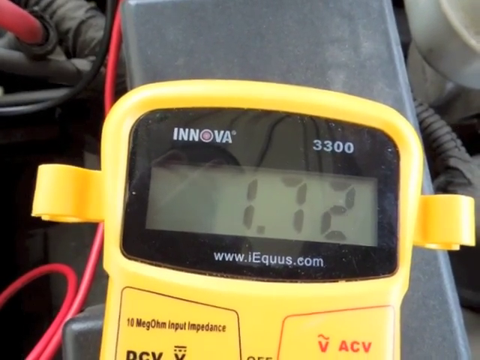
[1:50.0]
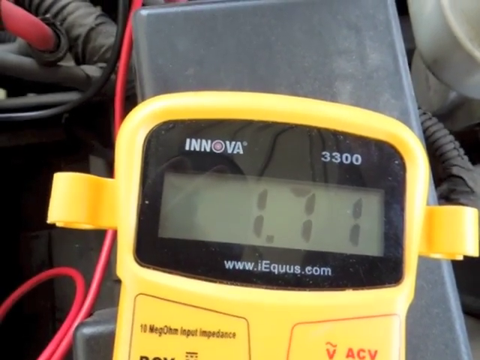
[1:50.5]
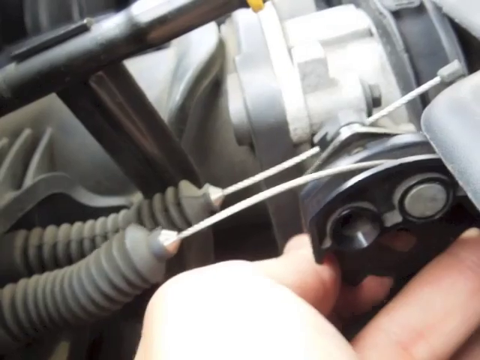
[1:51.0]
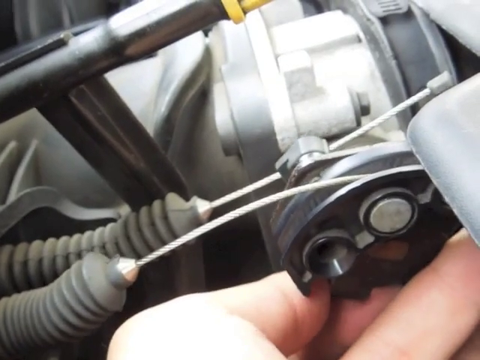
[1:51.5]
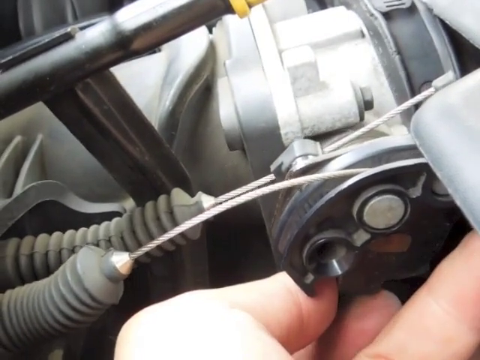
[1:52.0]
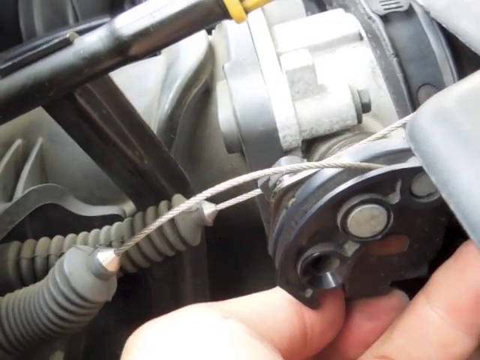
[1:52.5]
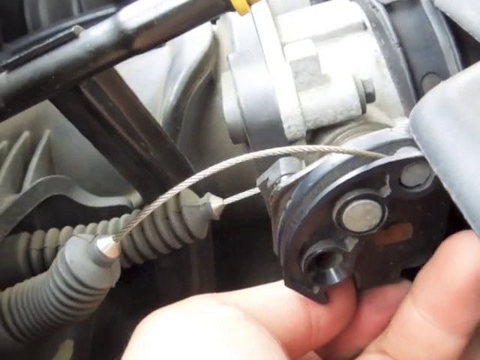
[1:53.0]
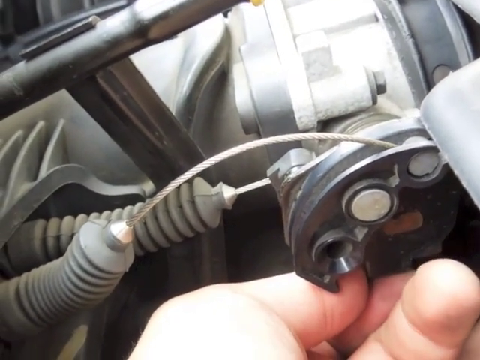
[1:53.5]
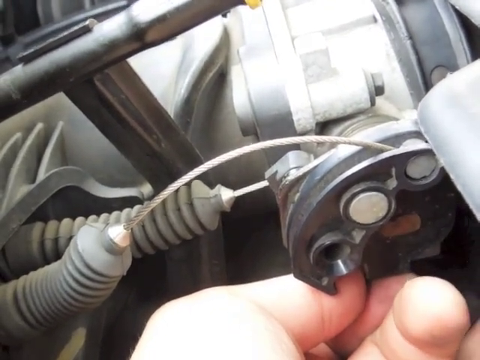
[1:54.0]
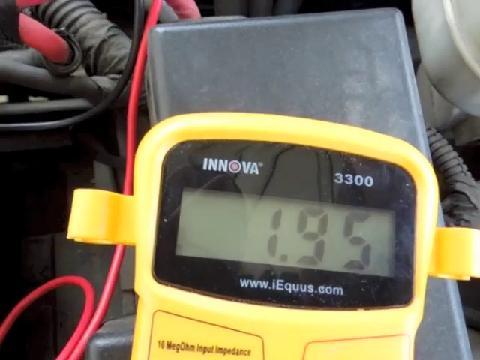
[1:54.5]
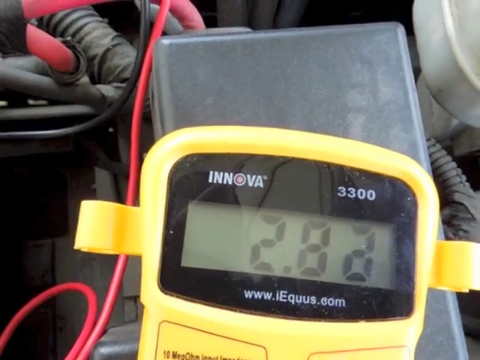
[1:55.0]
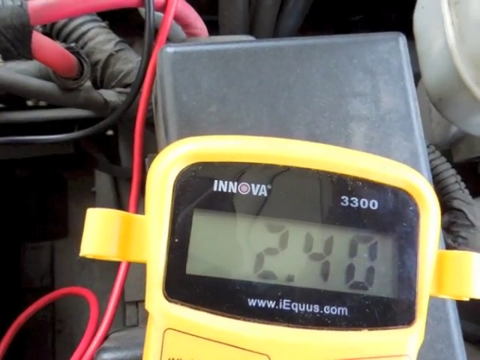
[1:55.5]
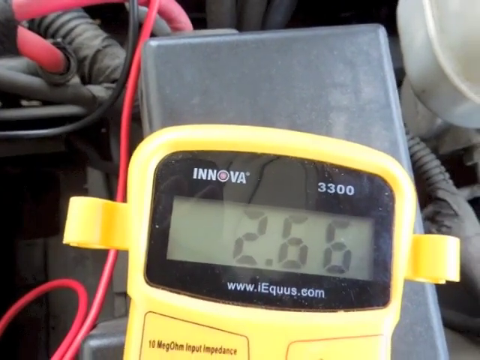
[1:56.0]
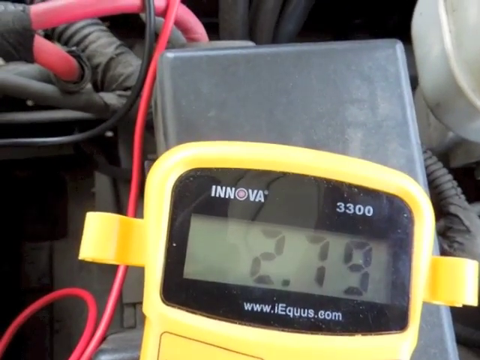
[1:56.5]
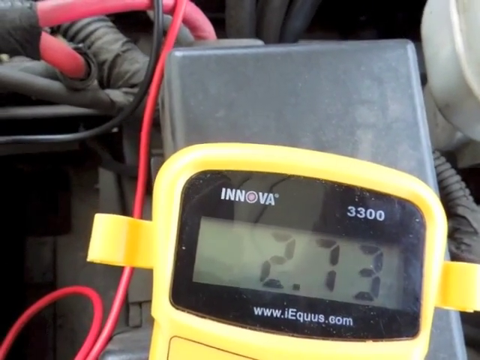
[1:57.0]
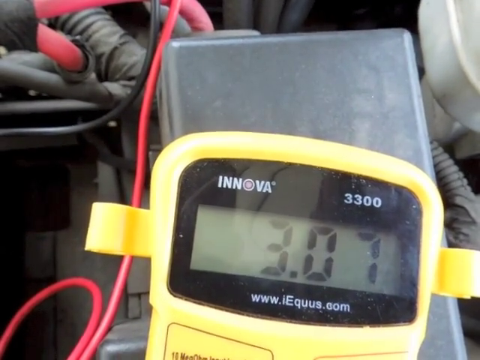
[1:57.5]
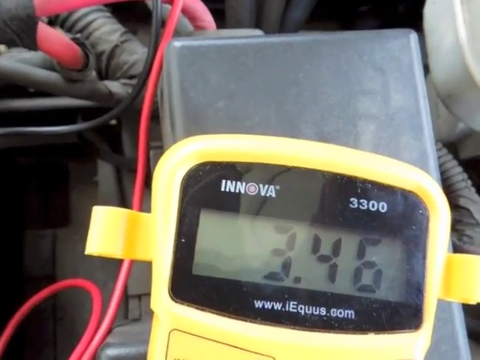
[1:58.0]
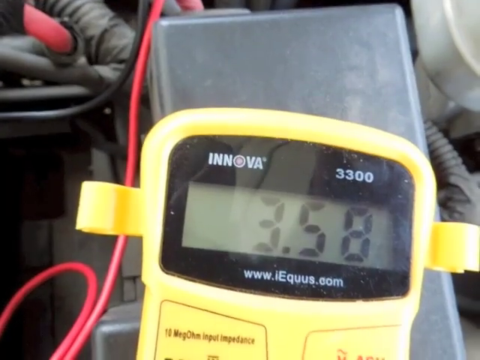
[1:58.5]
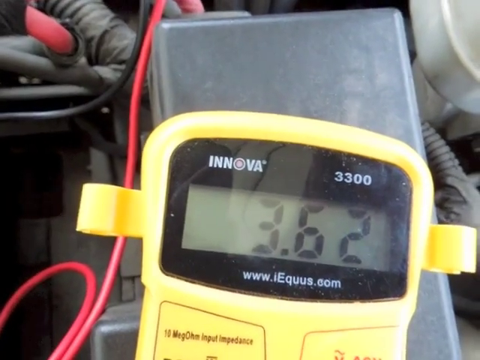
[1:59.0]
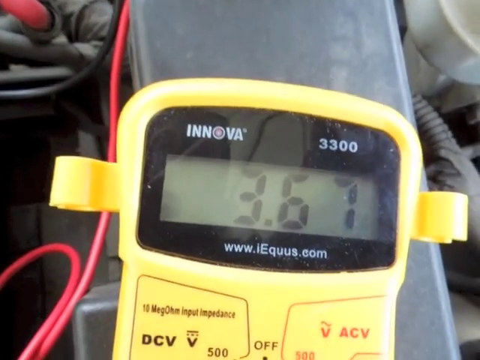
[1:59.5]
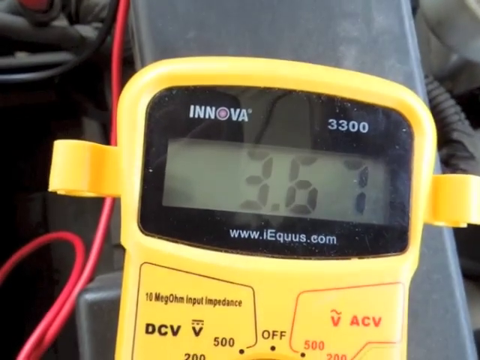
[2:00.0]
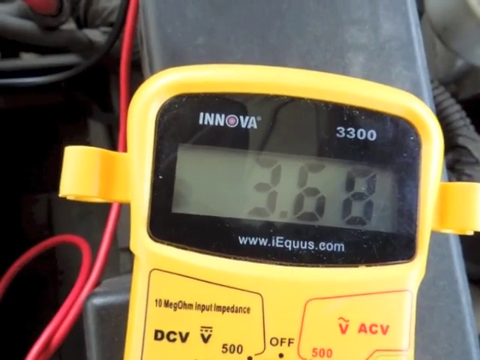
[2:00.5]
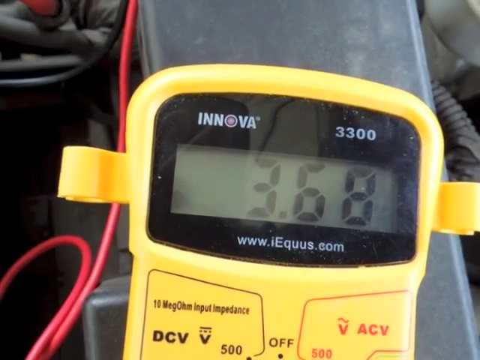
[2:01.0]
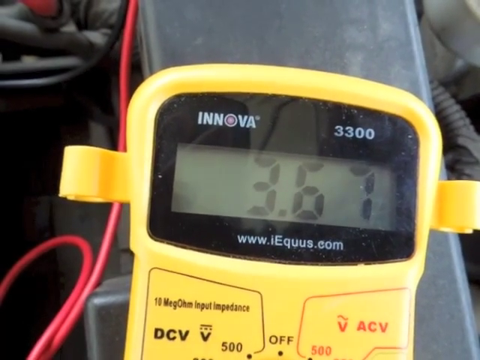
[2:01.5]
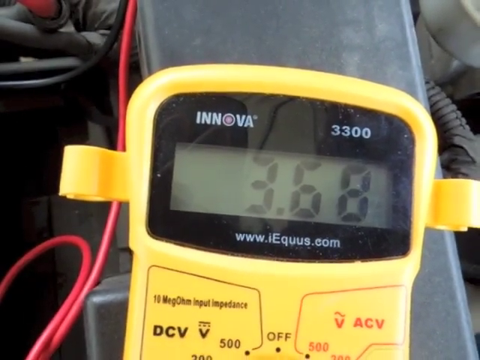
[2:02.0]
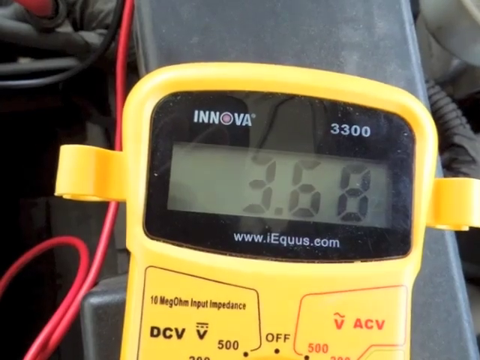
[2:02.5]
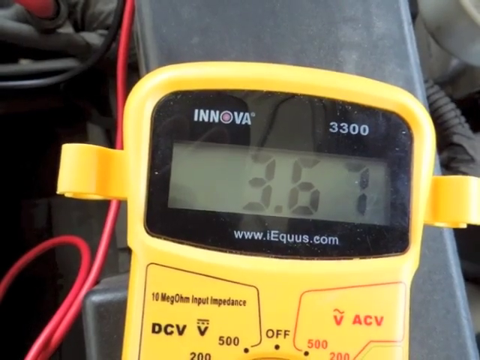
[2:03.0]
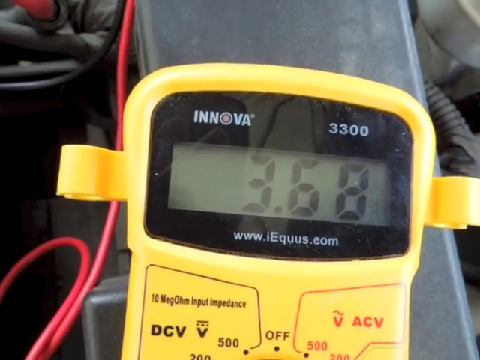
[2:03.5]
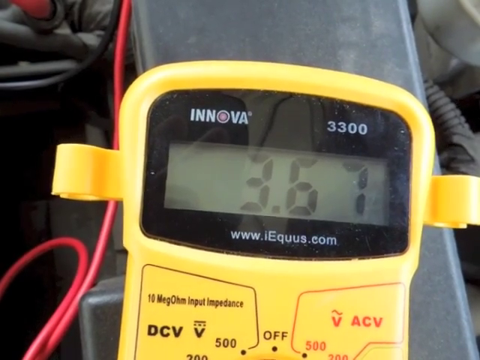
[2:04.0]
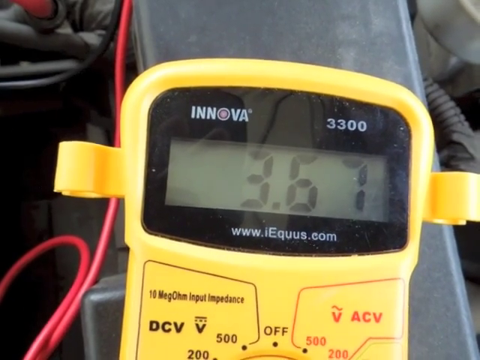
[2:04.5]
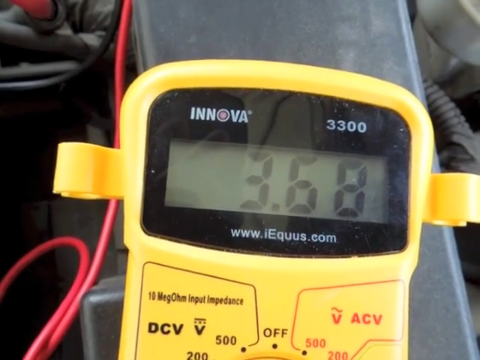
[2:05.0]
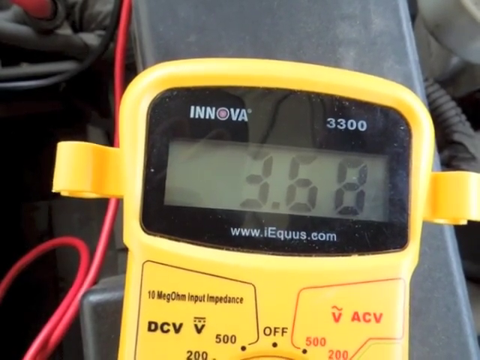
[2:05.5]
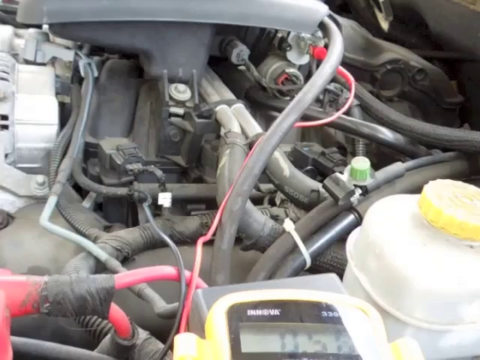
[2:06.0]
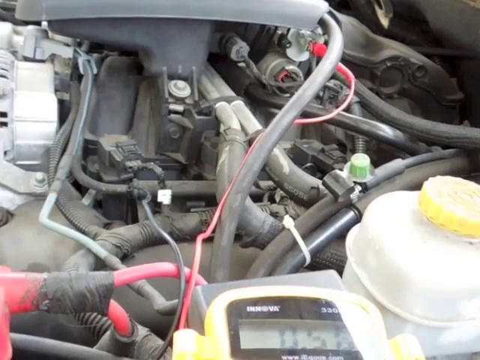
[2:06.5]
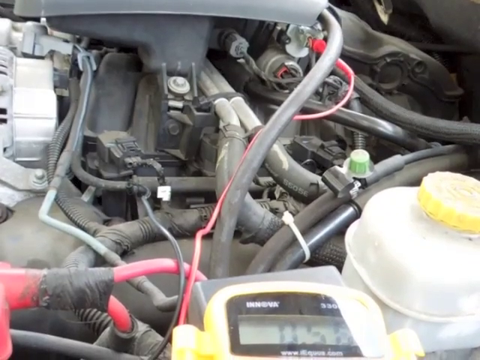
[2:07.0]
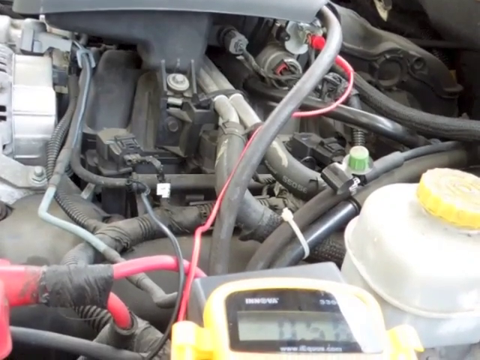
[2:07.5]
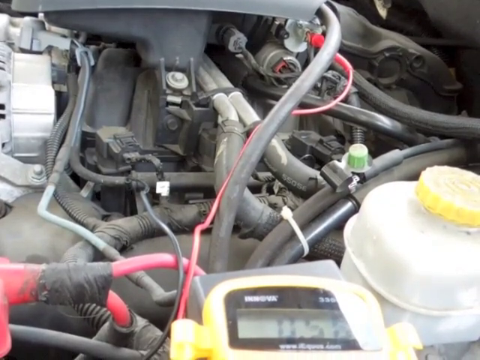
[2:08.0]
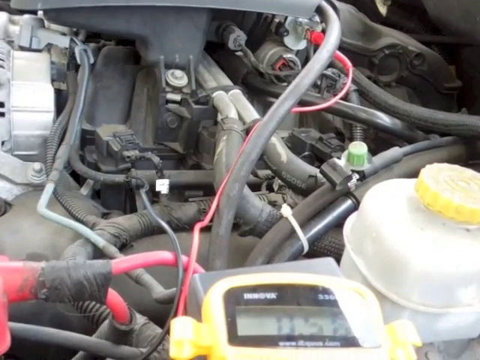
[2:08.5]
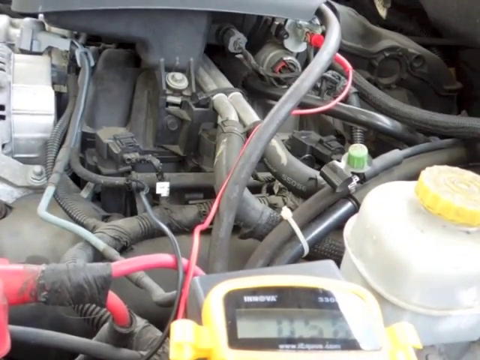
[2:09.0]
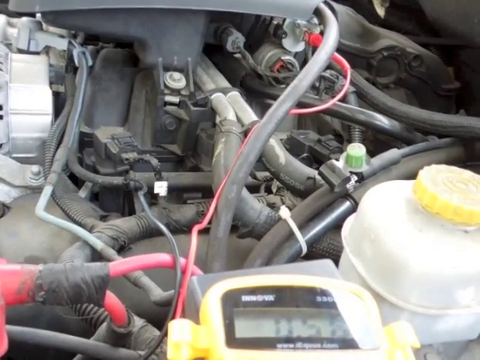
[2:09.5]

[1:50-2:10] The digital multimeter shows an initial reading of 1.83. The mechanic's left hand manipulates the pivoting guide of flexible stainless steel cables that feed into rubber accordion-type boots near the steering column, with additional cables and items visible in the distance on the far side of the column in the upper part of the screen. He moves the rotating guide counterclockwise, then lets it go and it springs back clockwise. The readings on the "INNOVA 3300", set at 20 on DCV, go up substantially to 3.68. The camera draws back to a full view of the engine compartment: the fluid reservoir with the yellow cap on the lower right, and a mass of rubber, metal and electrical wiring in and near the air cleaner cover at the very top of the image. The multimeter rests on a portion of the engine next to the white plastic fluid reservoir with the yellow cap.